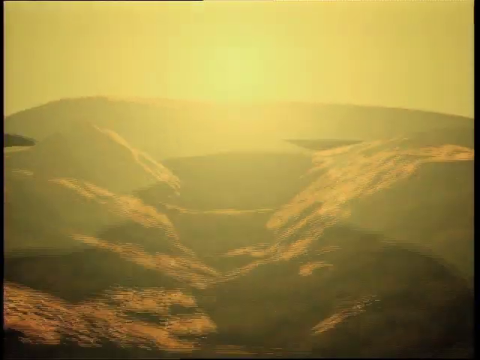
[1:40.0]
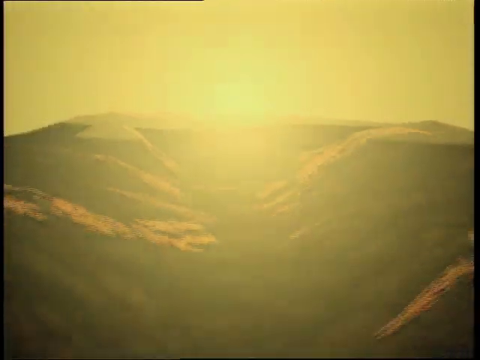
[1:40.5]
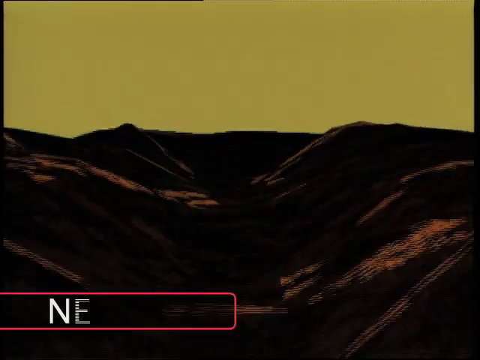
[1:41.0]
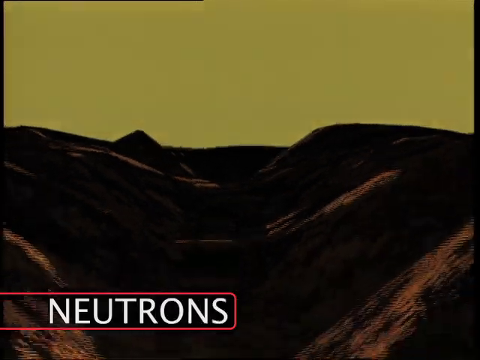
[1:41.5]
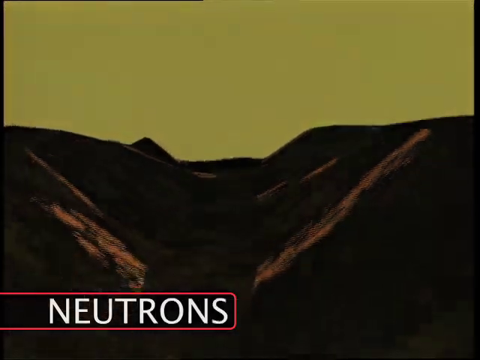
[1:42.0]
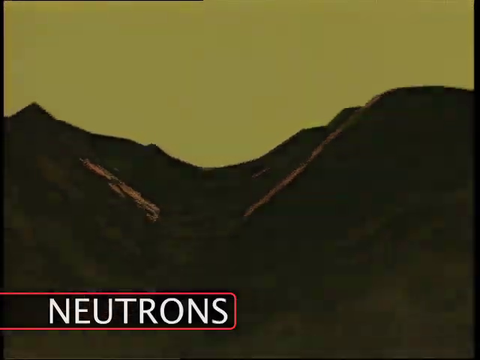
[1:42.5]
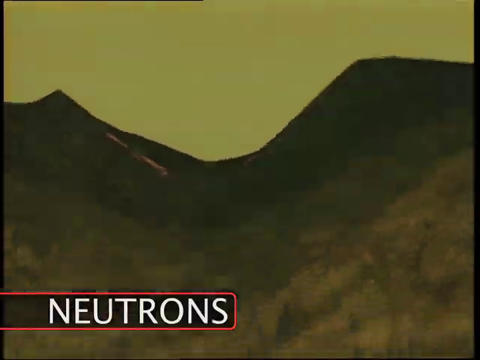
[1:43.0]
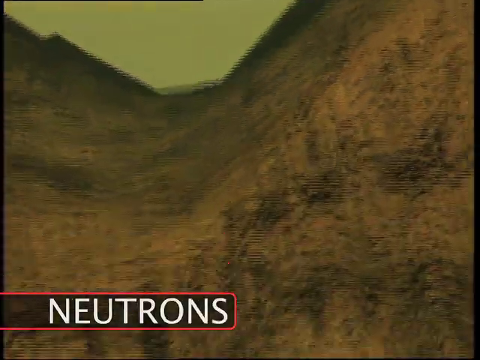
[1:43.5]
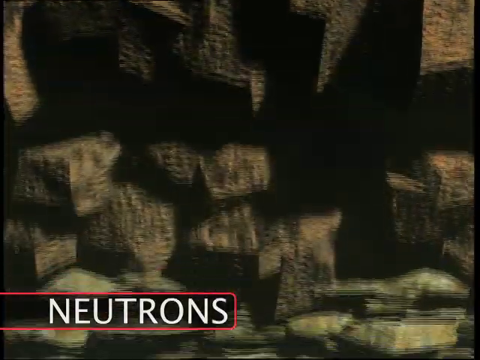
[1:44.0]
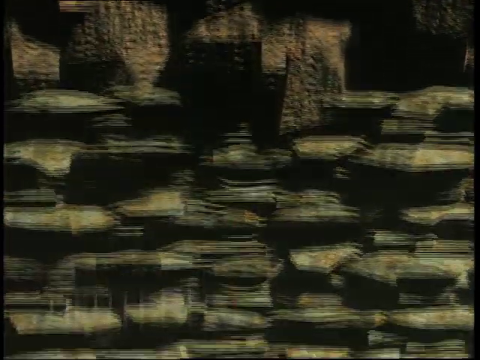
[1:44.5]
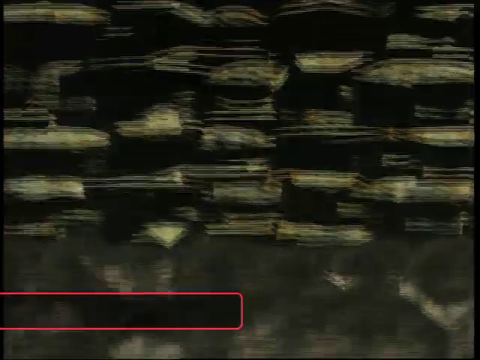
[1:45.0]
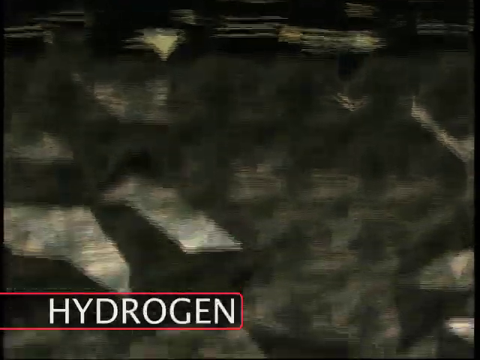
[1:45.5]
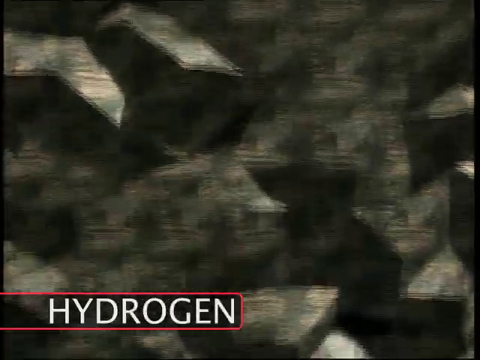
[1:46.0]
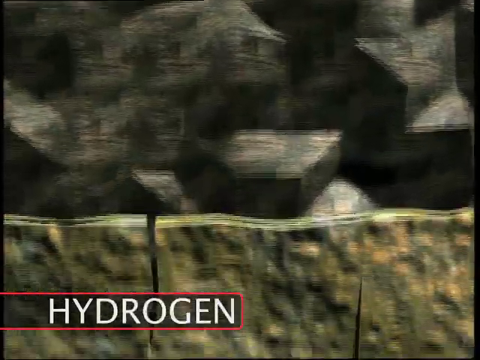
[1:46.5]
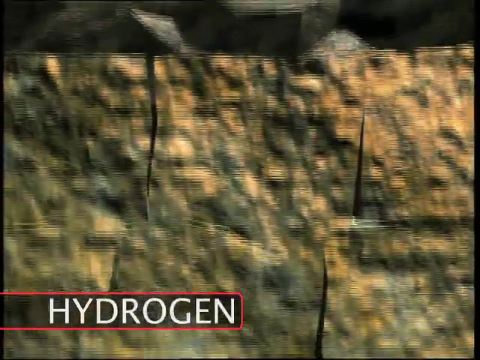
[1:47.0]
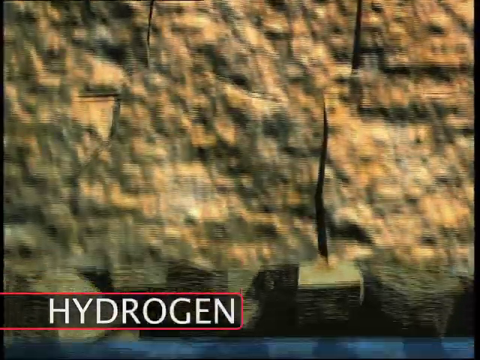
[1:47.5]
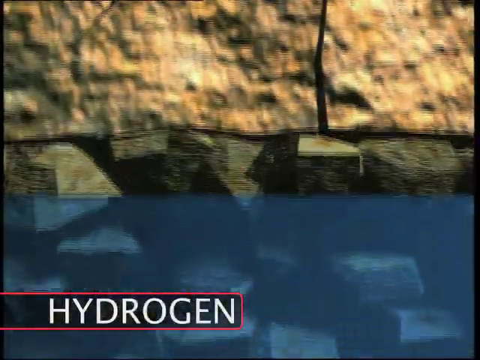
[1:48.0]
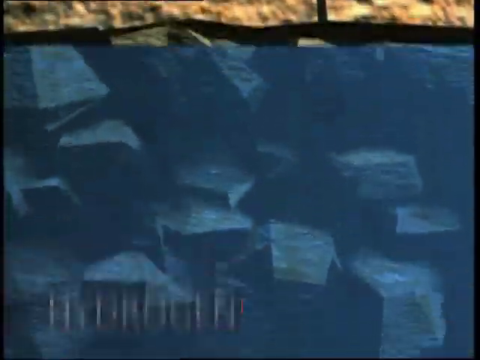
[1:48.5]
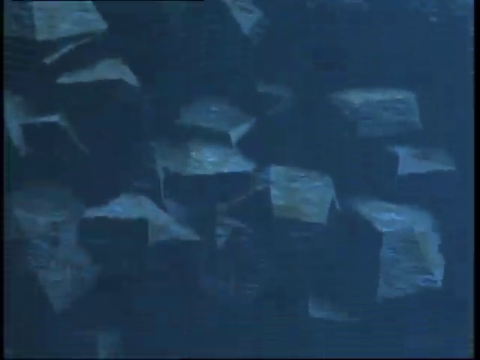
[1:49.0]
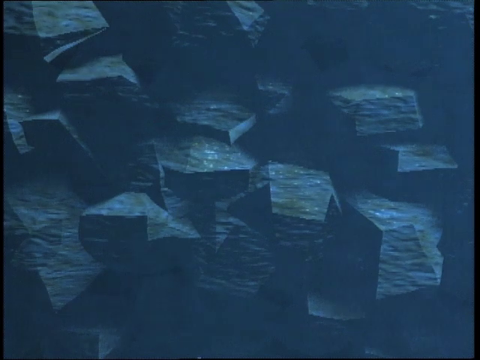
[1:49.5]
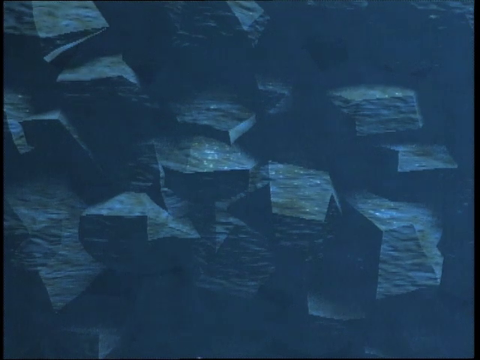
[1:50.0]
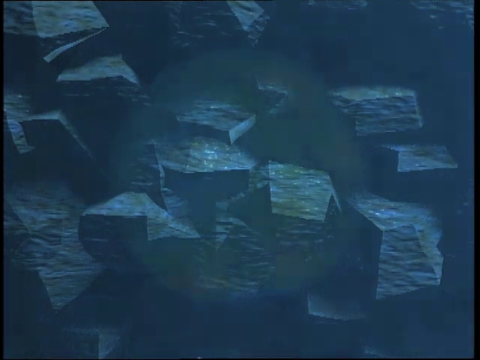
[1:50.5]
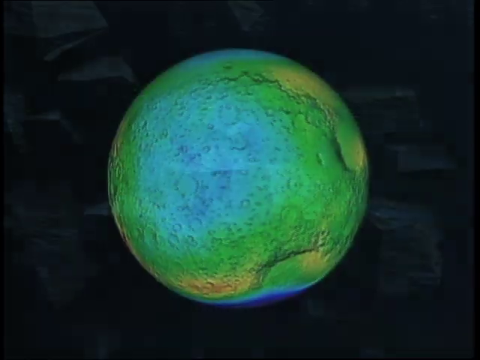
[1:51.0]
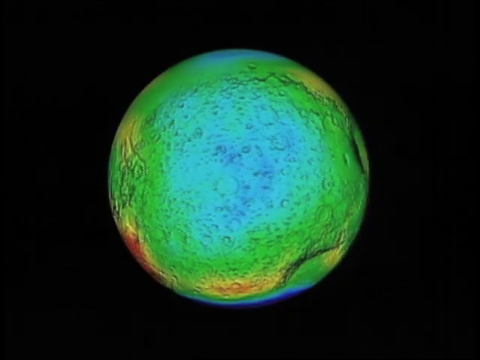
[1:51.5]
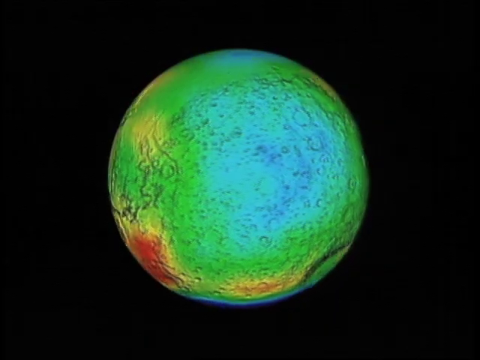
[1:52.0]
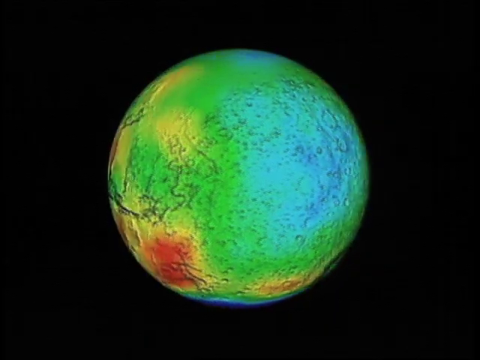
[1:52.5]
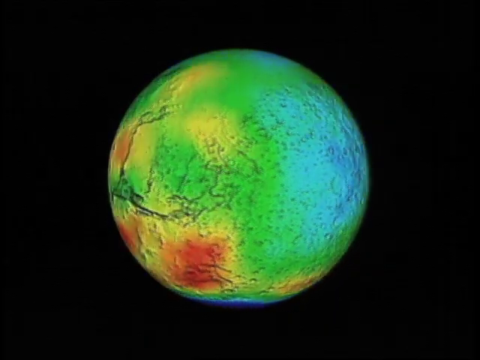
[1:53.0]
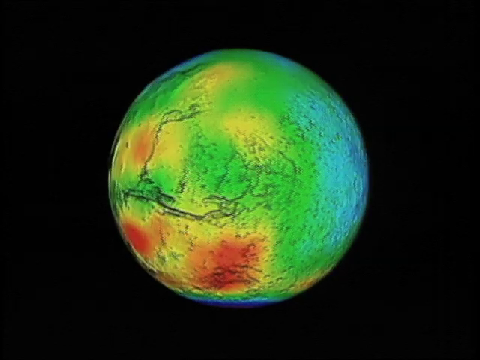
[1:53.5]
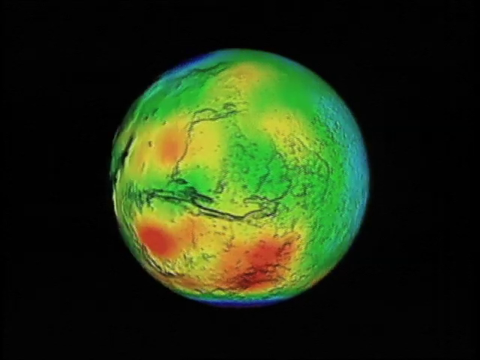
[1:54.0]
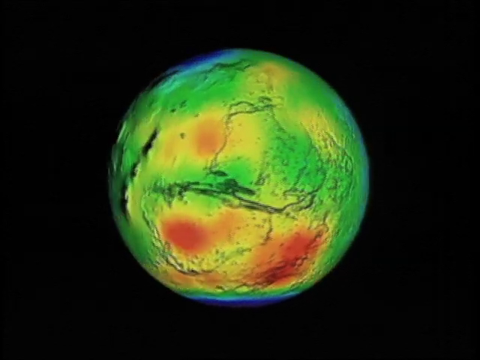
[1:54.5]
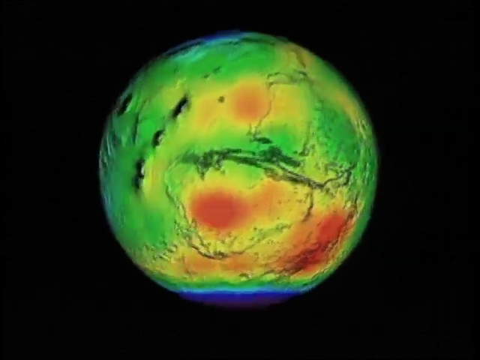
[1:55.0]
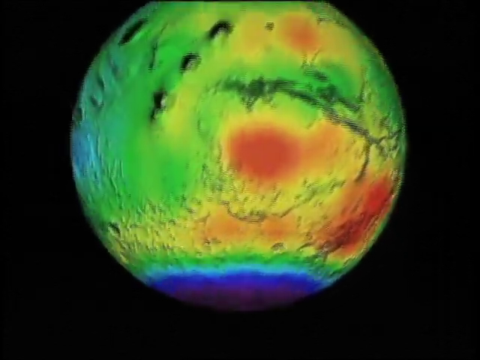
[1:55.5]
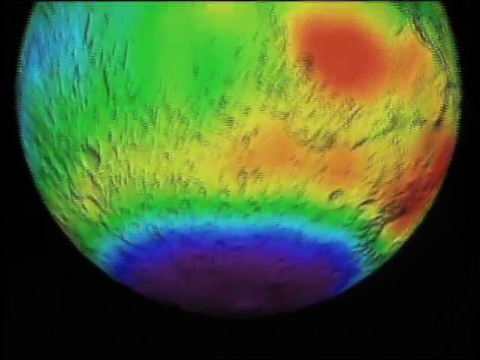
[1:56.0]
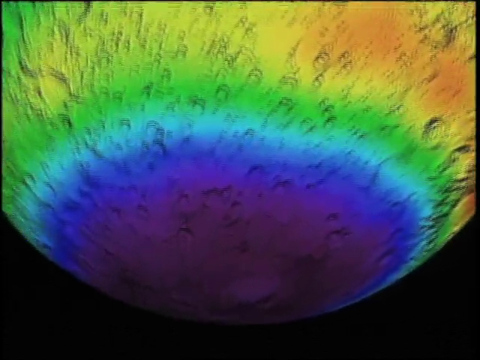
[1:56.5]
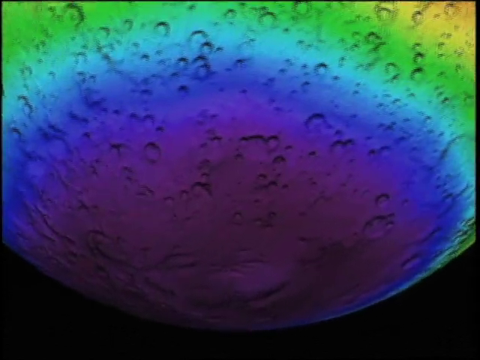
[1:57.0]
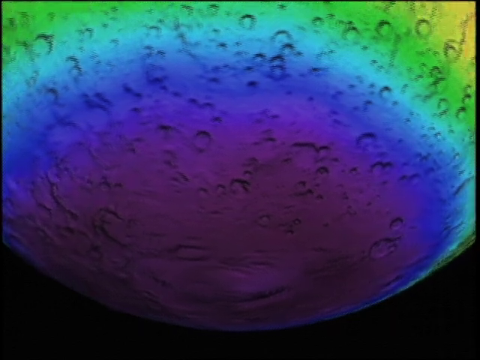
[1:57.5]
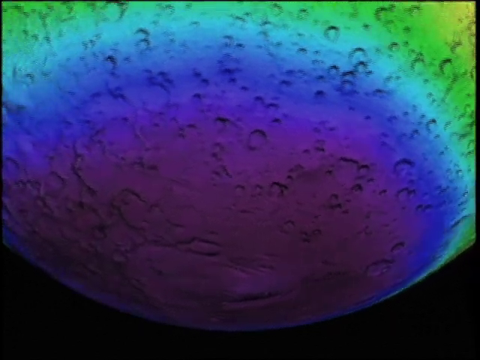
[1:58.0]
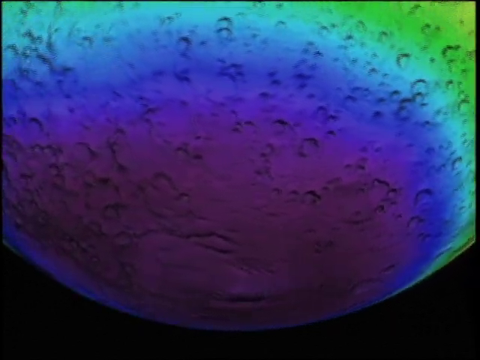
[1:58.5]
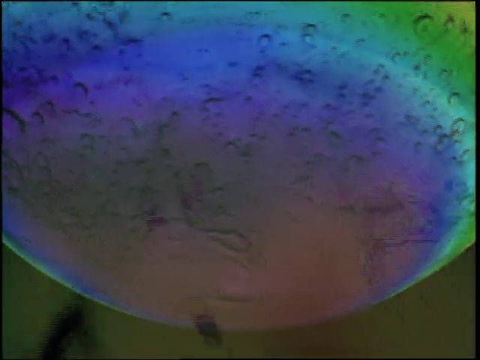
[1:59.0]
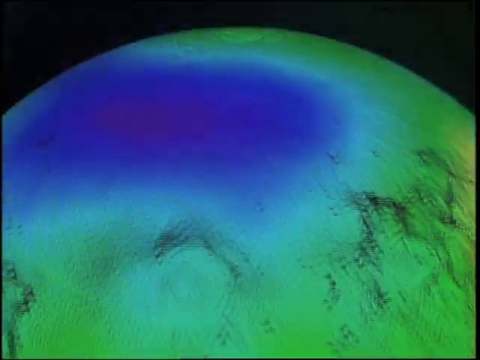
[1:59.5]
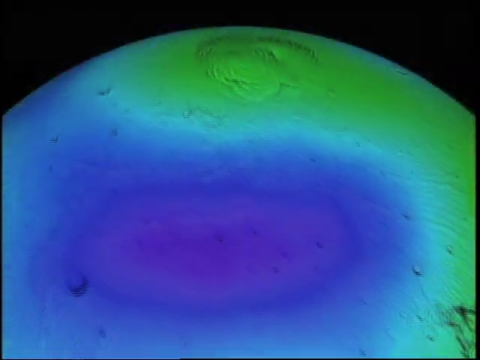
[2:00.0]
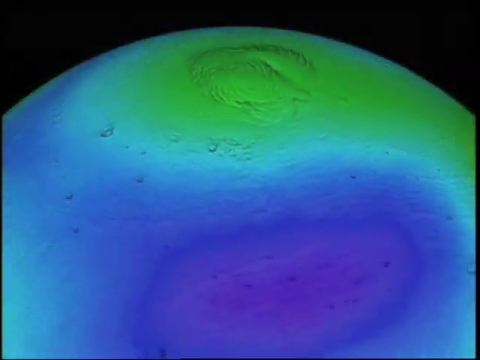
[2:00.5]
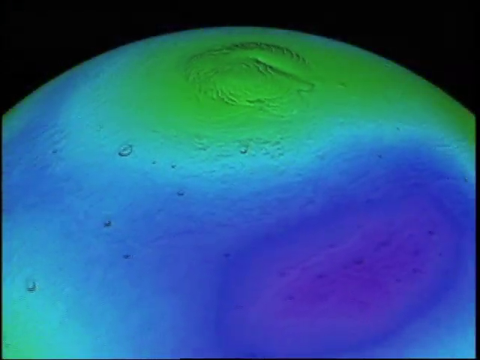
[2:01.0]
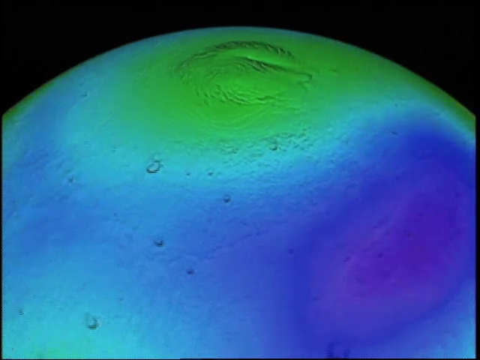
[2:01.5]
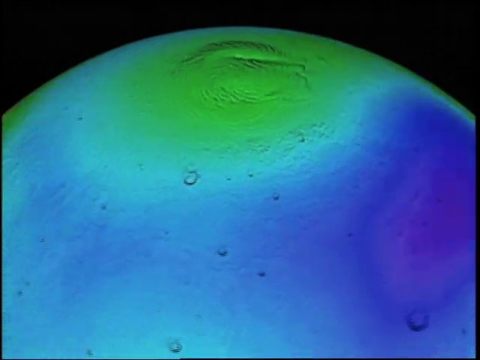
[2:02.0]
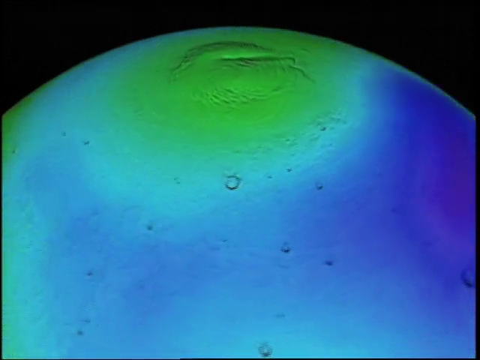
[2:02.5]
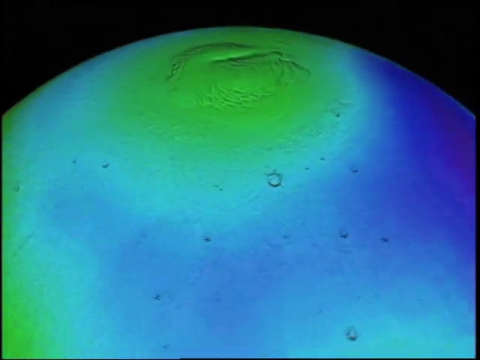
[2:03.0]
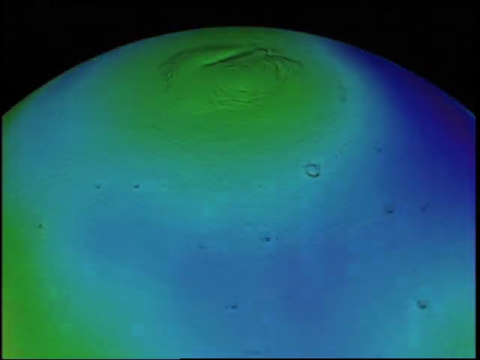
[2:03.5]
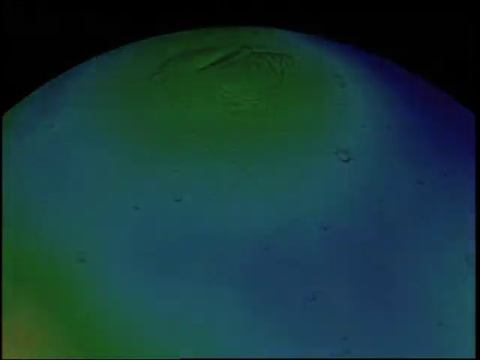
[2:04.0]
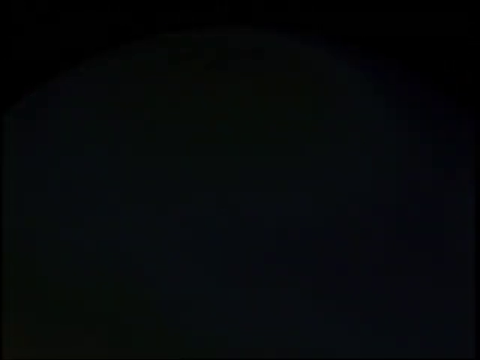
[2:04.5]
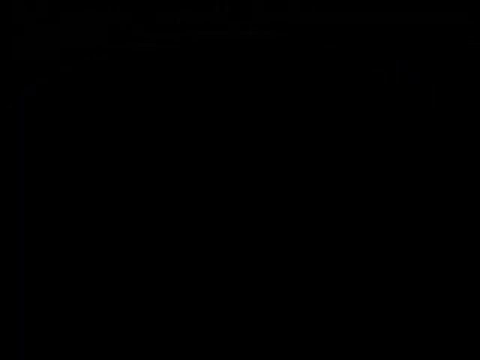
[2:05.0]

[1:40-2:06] A very reddish landmass shows a valley between two hilly terrains. White text slides onto the screen from the lower left, reading "neutrons". The camera pans forward over the peaks and the valleys between them. A closer view shows rocks colored gray with tints of brown. Another layer appears, as though in a cross-section of the landmass, looking covered with blue, which might represent water. A label reading "hydrogen" appears in white text on the lower left, while the blue layer over the rocks remains in view. Next comes a large green planetary body that seems to have rough craters on its surface, along with some areas of red and yellow. The camera pans closer, showing a blue and purple circumference around the base or south pole of the body, which continues to revolve in a clockwise direction.